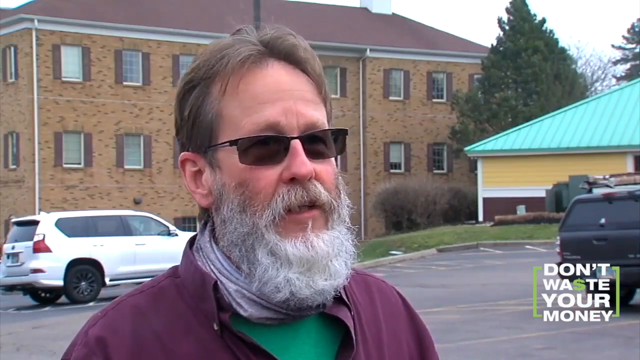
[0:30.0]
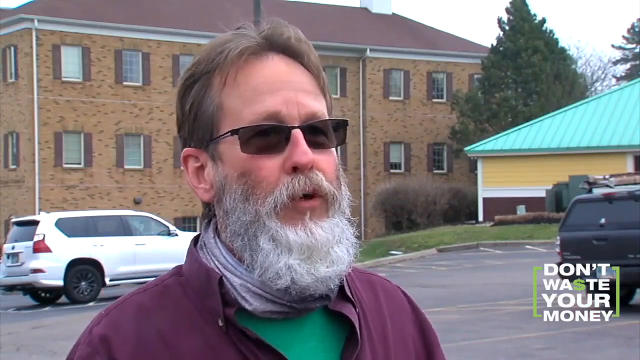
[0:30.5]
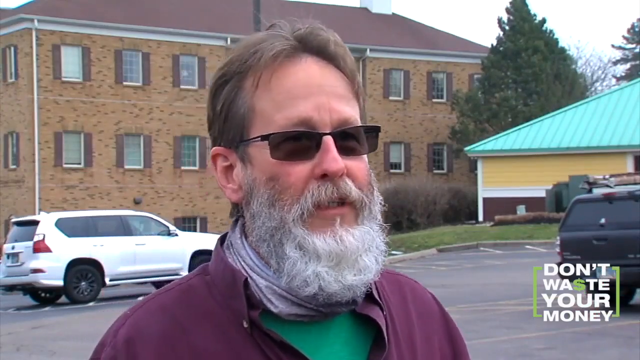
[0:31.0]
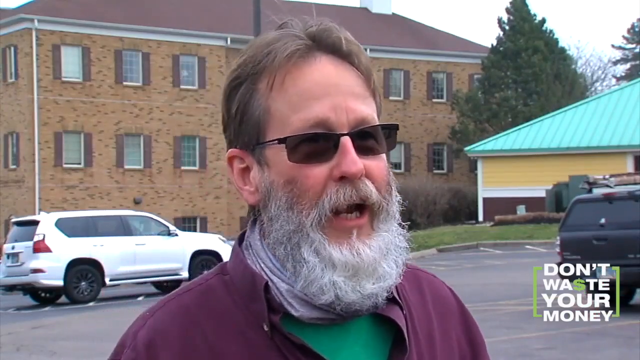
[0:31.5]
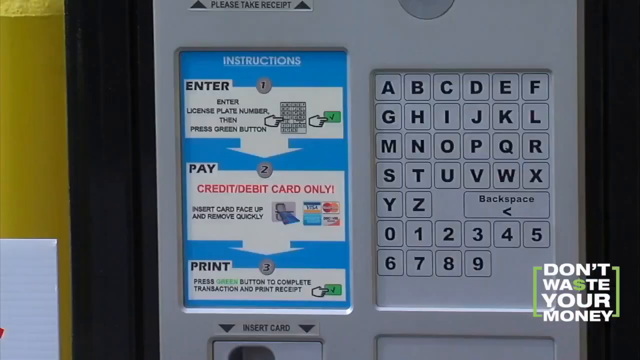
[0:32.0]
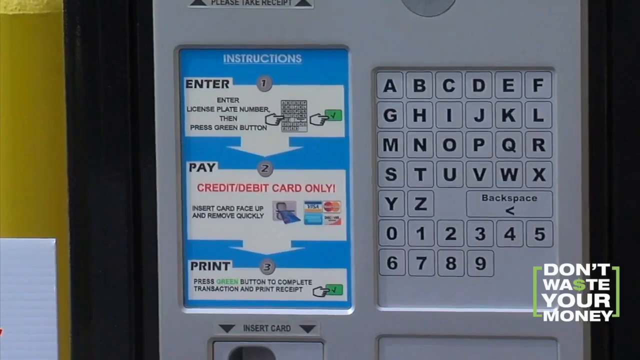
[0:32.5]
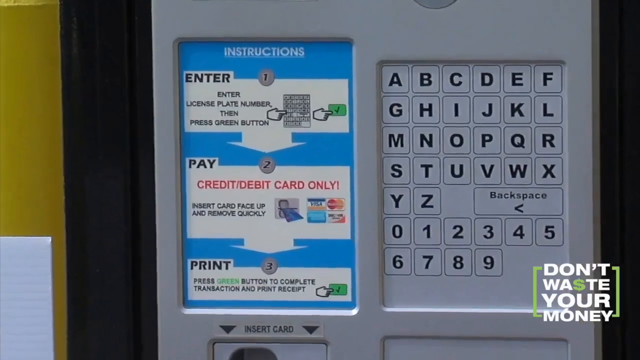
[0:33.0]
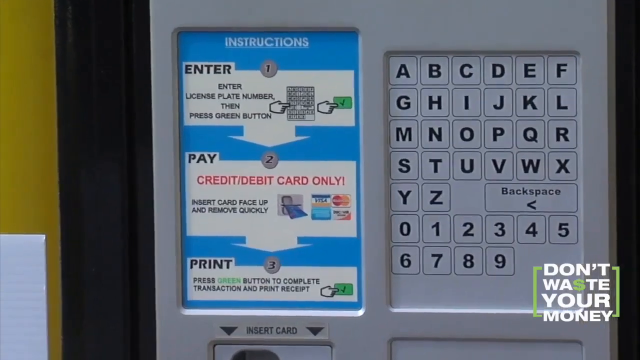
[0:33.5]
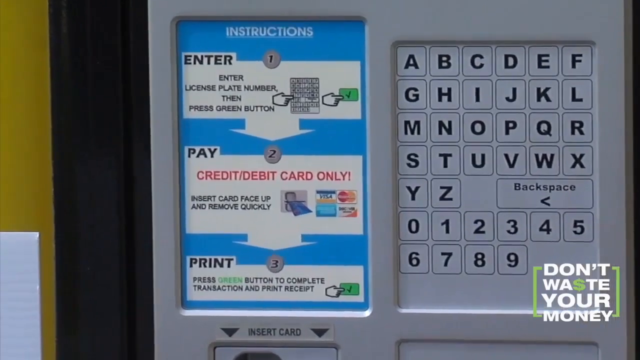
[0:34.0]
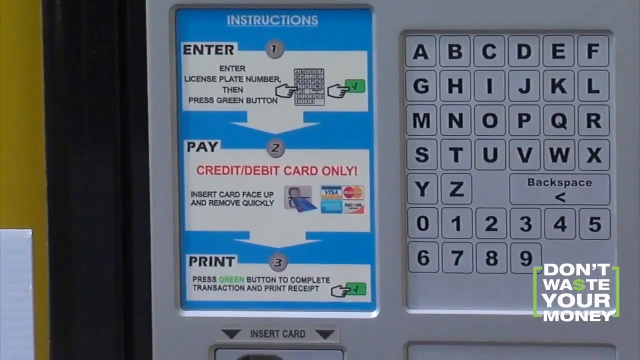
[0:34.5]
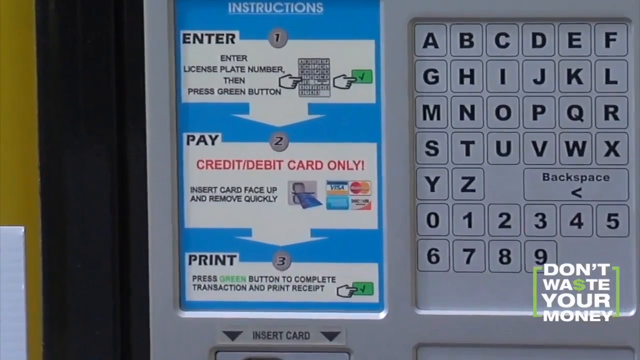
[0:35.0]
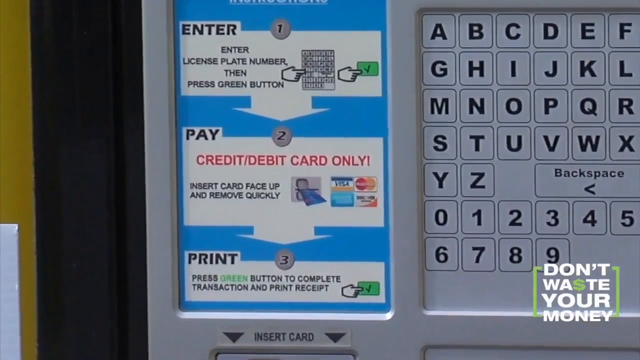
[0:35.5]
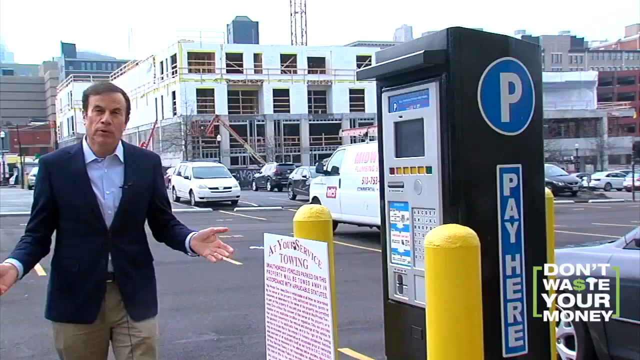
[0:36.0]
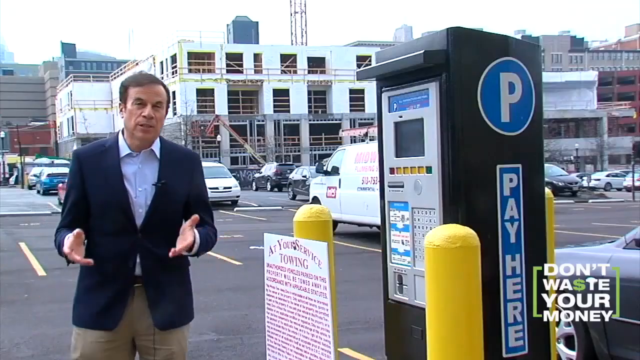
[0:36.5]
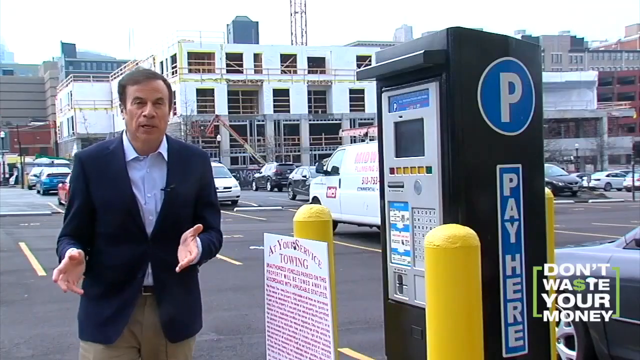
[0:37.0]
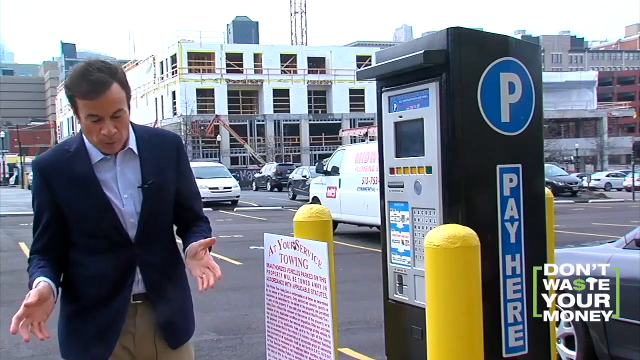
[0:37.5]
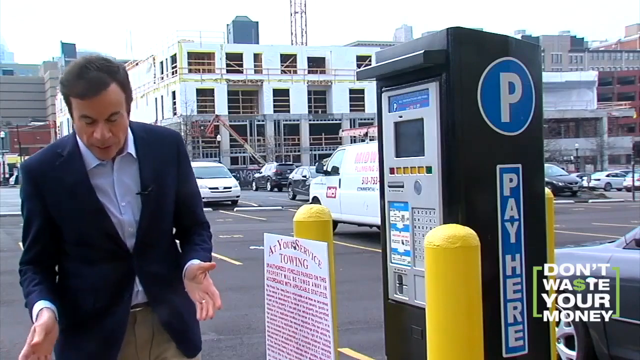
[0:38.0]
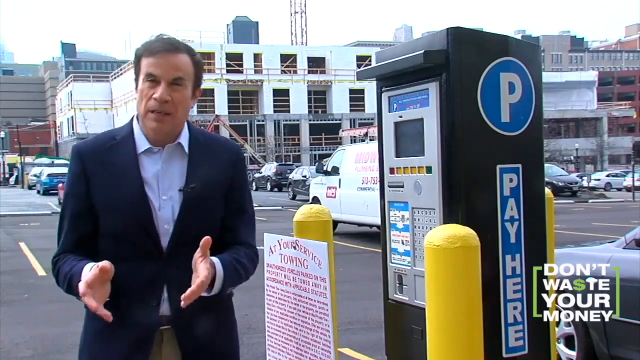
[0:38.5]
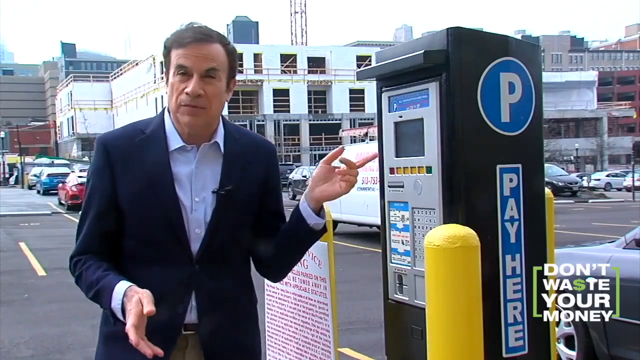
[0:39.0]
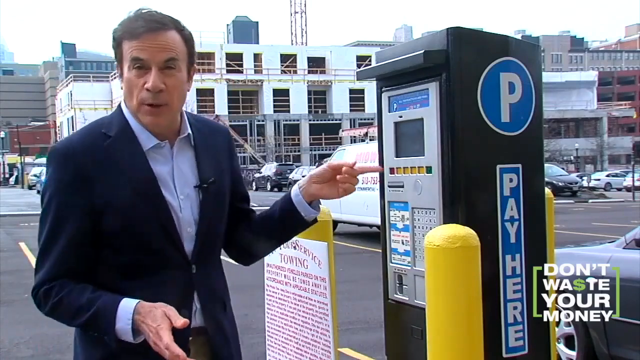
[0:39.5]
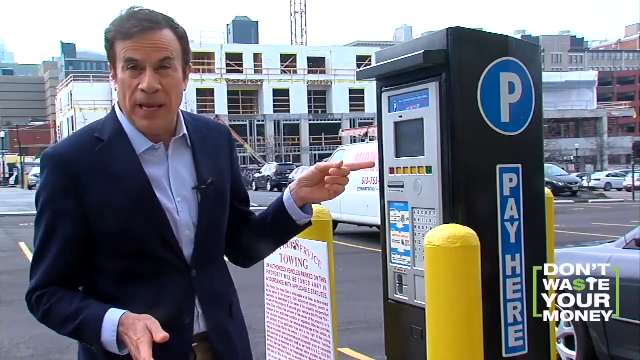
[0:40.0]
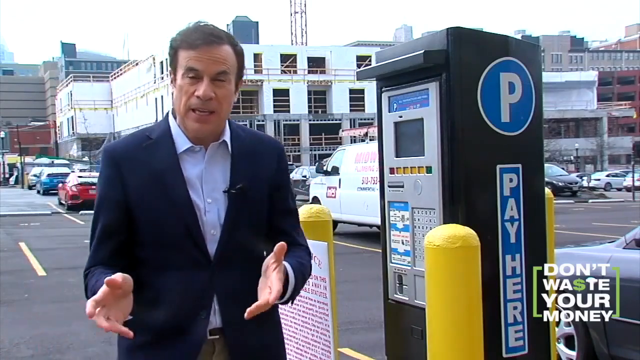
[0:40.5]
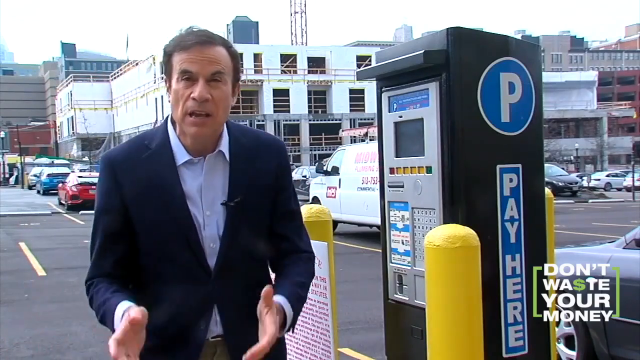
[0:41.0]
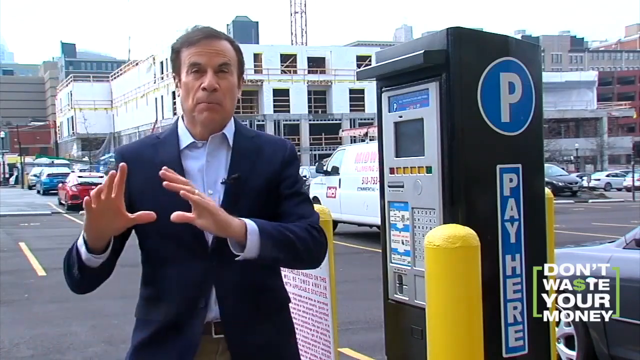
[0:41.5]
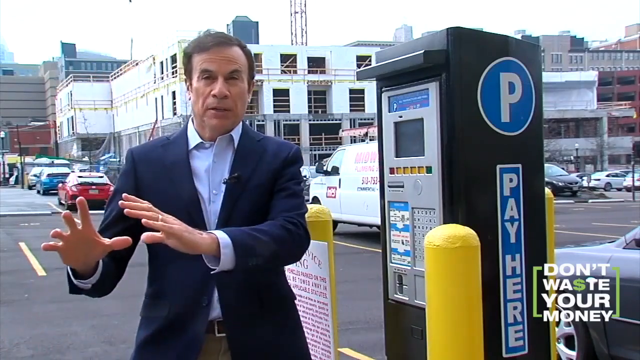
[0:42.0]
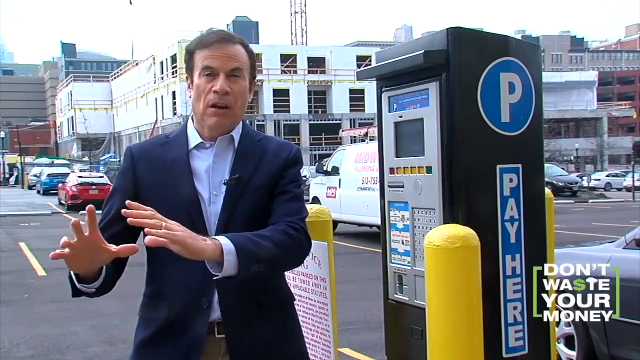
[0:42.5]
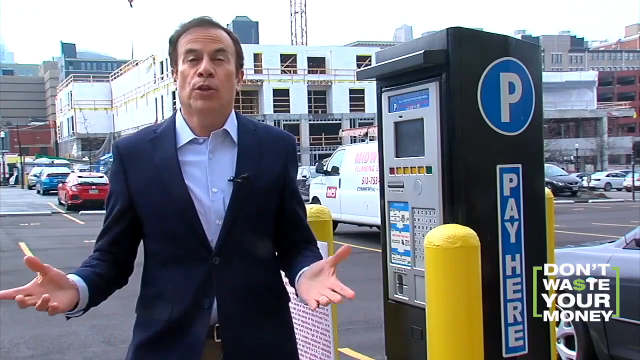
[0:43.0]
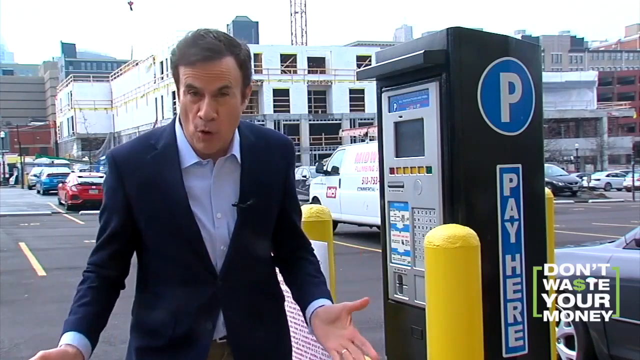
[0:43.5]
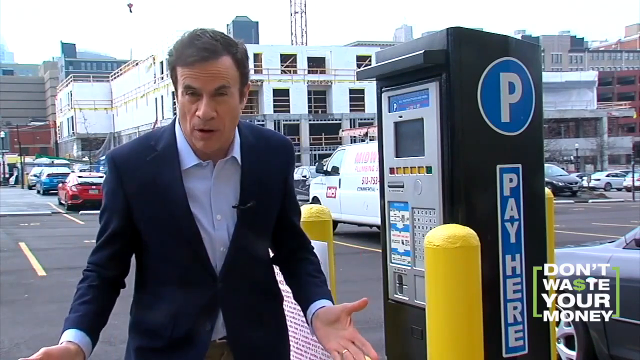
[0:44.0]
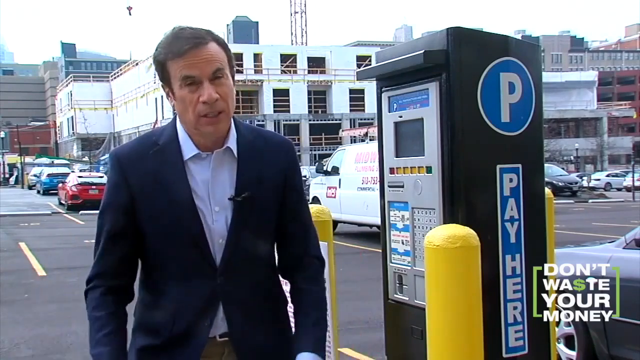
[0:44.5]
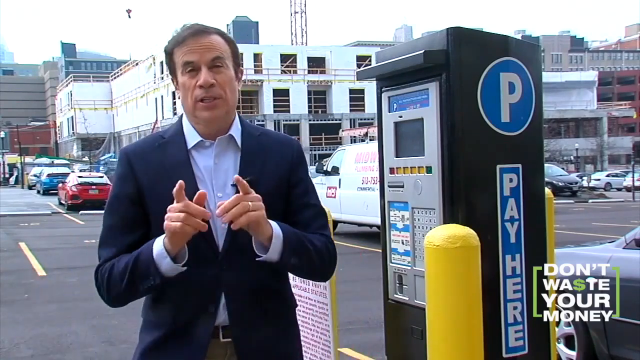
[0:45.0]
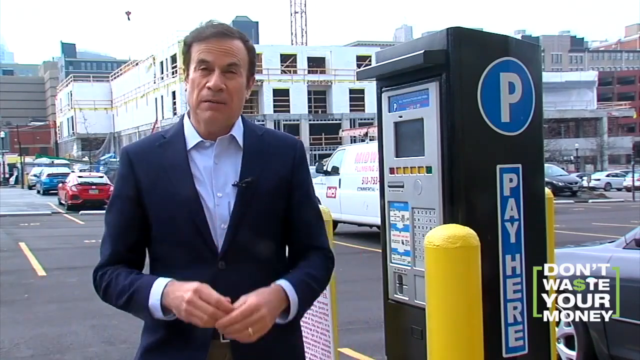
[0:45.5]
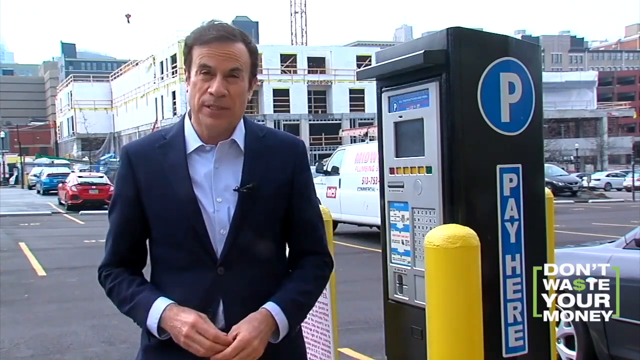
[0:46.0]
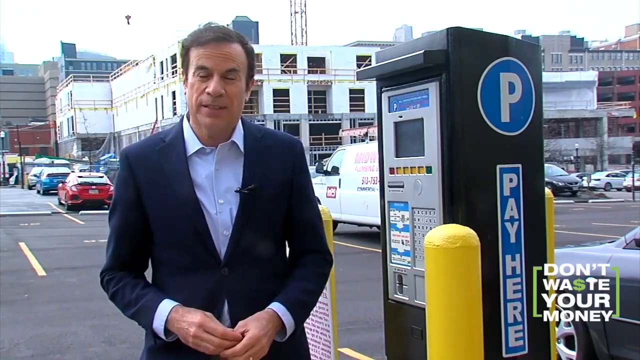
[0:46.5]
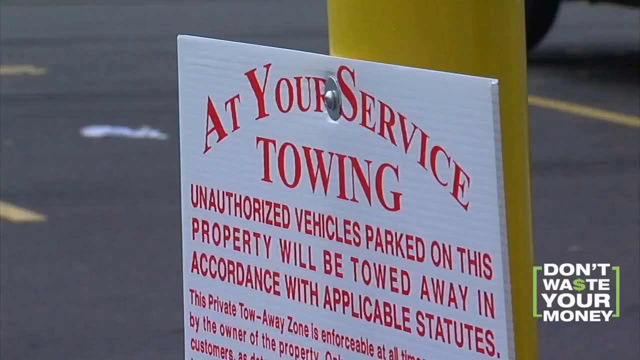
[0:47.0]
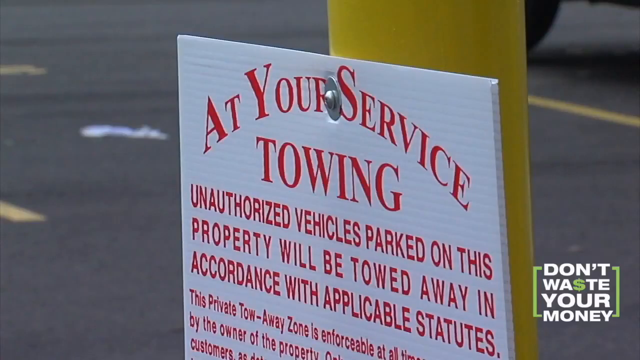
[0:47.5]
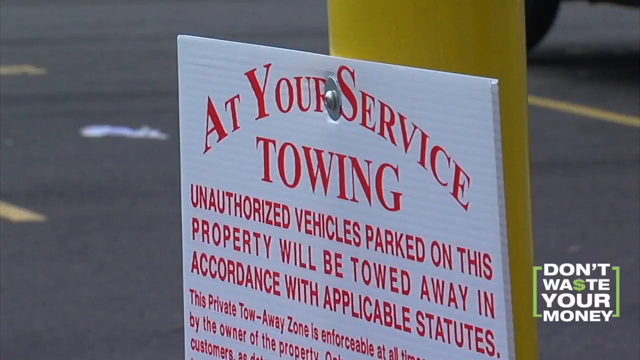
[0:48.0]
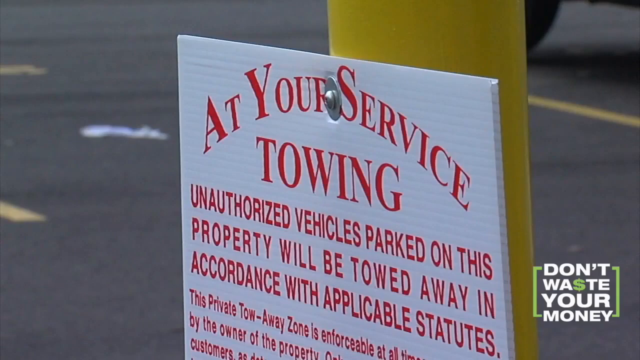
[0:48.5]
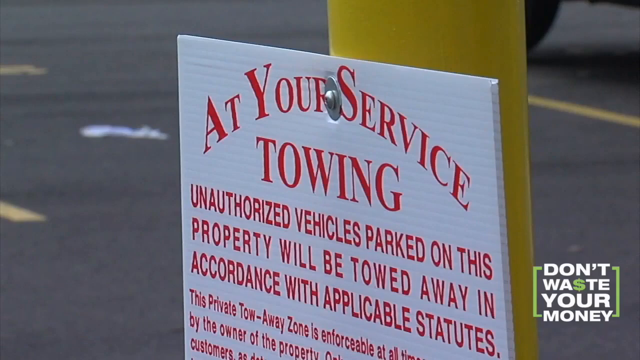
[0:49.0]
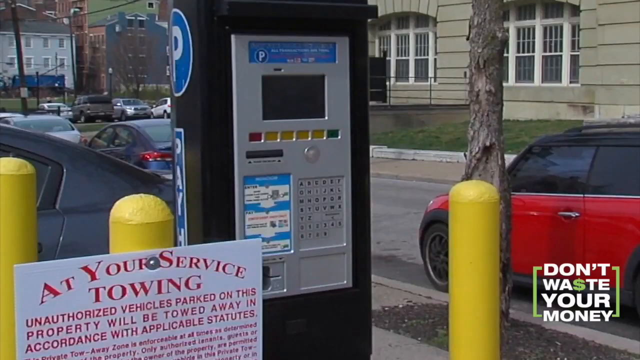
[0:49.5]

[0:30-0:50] A logo in the corner says "Don't Waste Your Money," with the S in "waste" shown as a dollar sign. First, a man with a full gray beard and narrow sunglasses talks to someone off camera. The image then switches to the display panel of a parking lot pay kiosk, with a keypad of letter and number keys on the right and instructions on the left. Next, a man in a blue jacket and blue shirt stands next to one of these kiosks, speaking directly to the camera; he gestures with his hands as he speaks and at one point points back toward the kiosk. A close-up follows of a sign that says, "At your service towing. Unauthorized vehicles parked on this property will be towed away in accordance with applicable statutes," and finally there are more photographs of the pay kiosk.